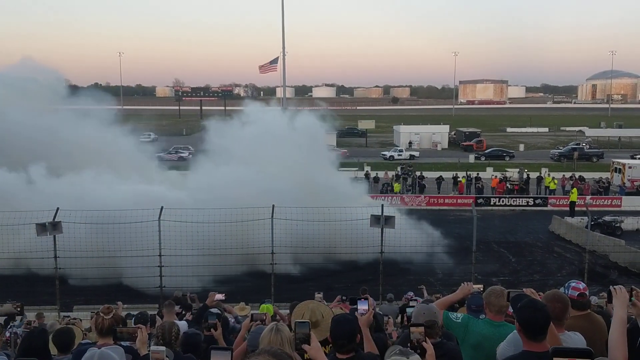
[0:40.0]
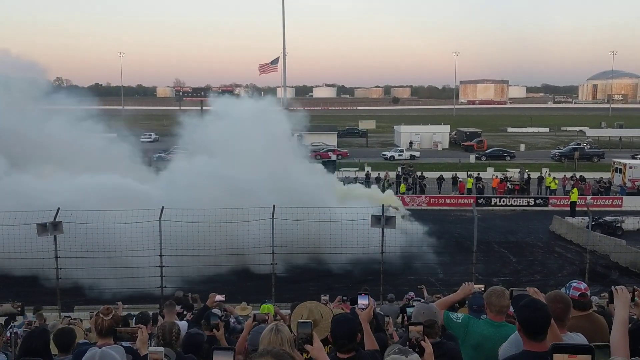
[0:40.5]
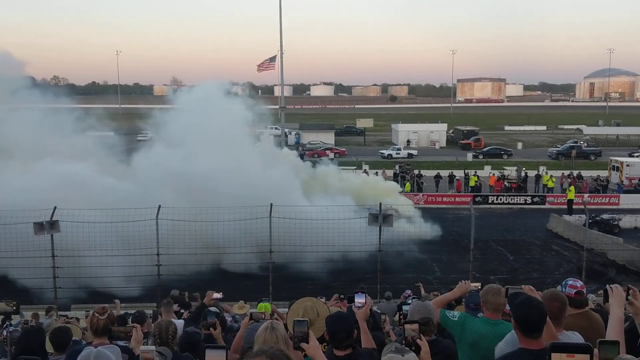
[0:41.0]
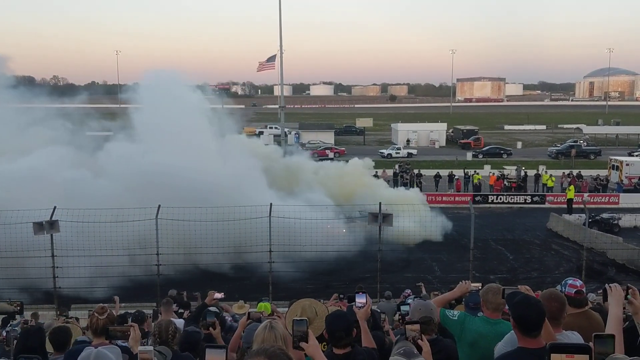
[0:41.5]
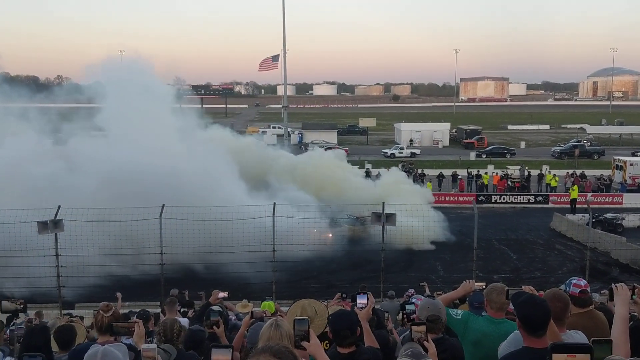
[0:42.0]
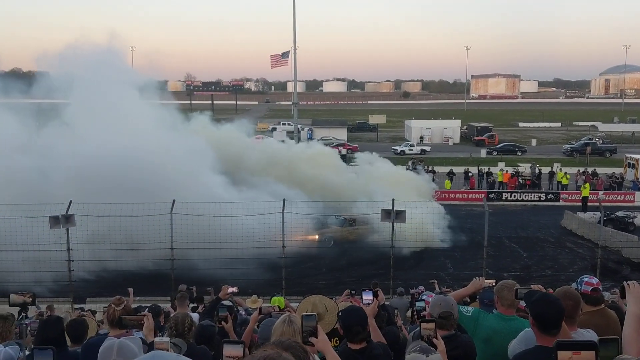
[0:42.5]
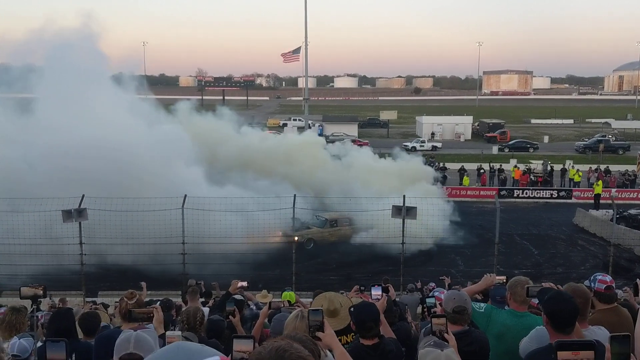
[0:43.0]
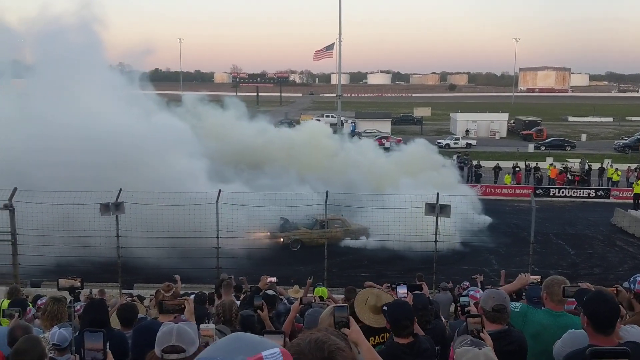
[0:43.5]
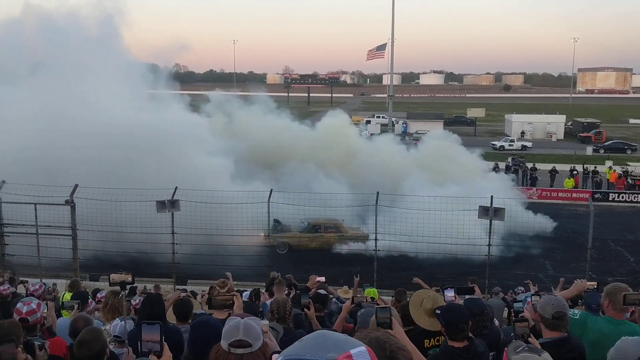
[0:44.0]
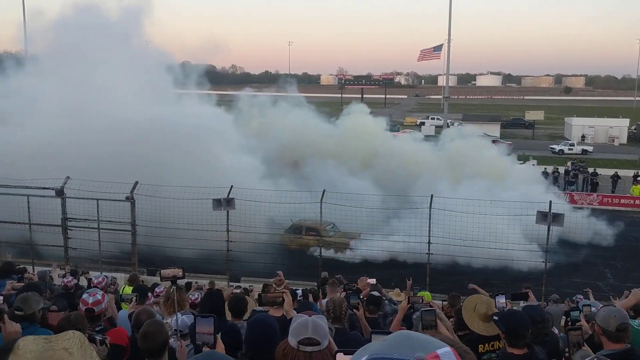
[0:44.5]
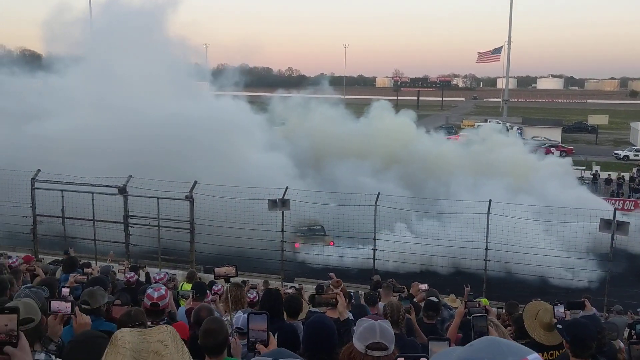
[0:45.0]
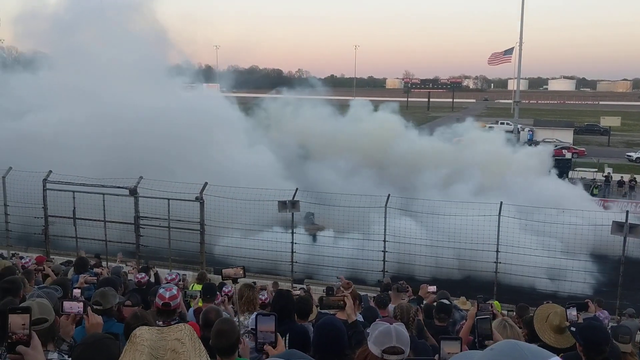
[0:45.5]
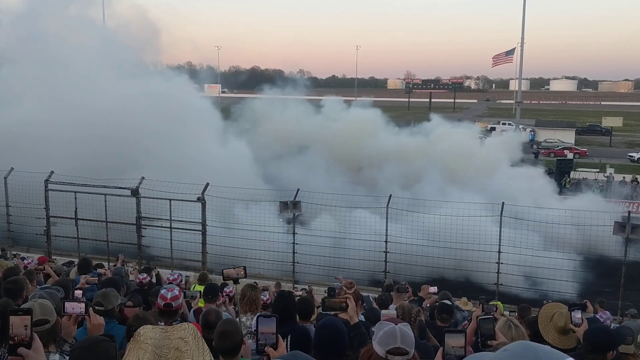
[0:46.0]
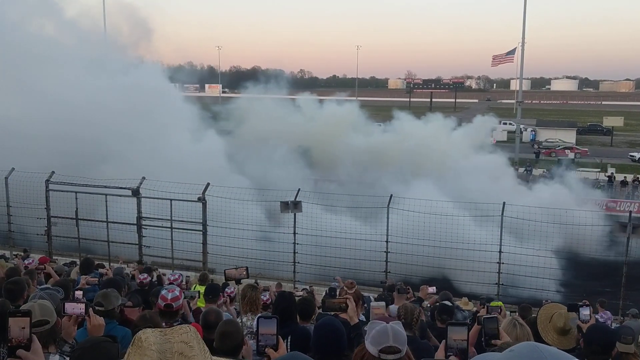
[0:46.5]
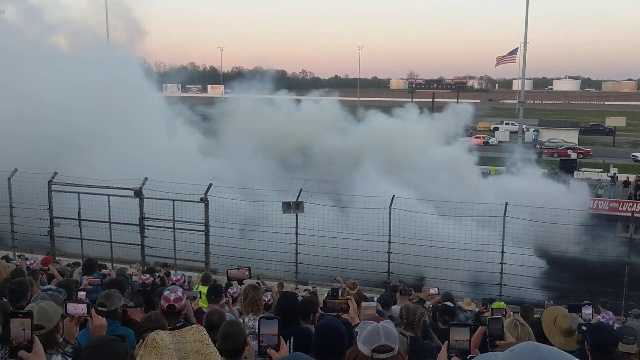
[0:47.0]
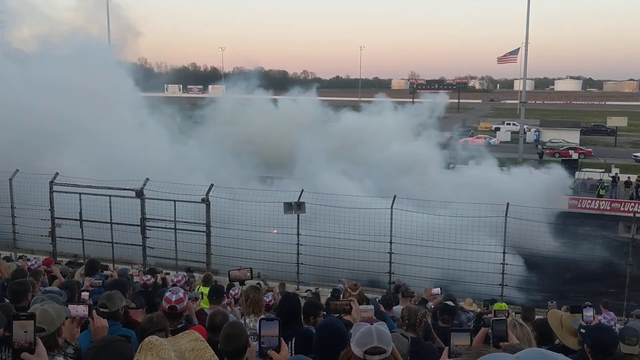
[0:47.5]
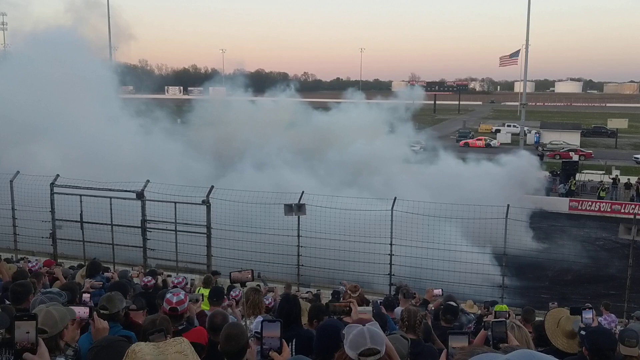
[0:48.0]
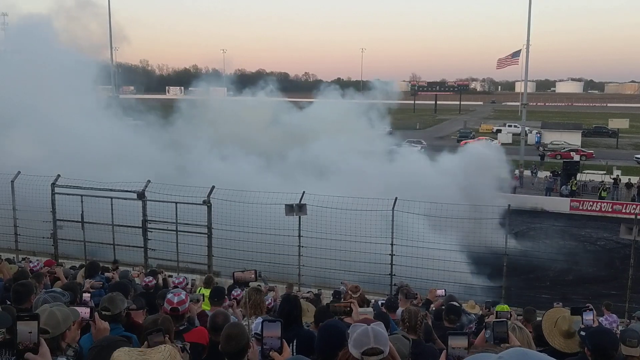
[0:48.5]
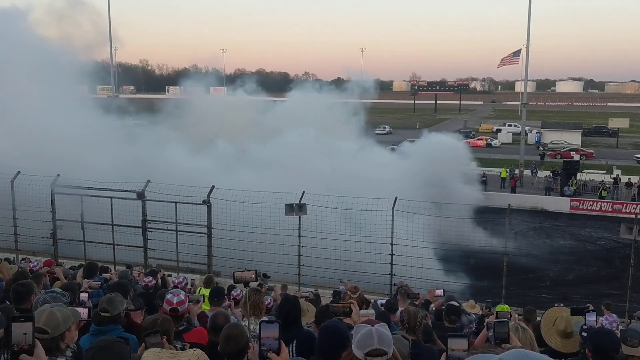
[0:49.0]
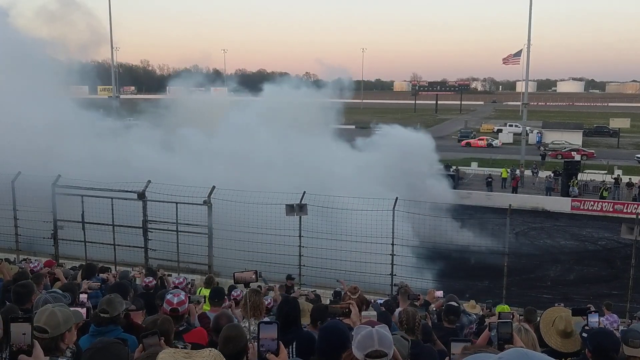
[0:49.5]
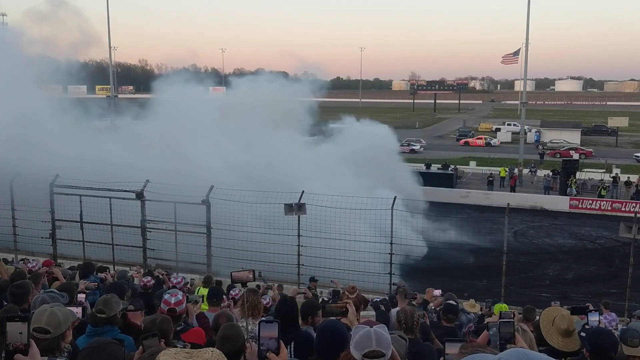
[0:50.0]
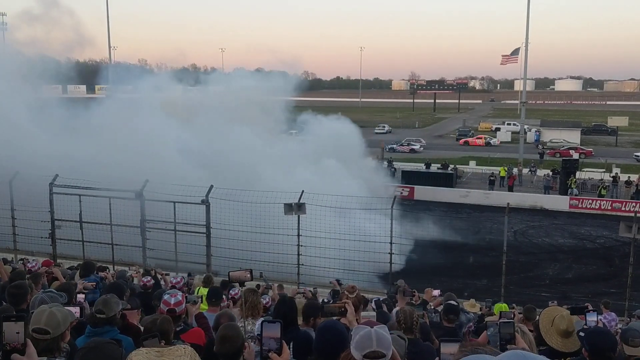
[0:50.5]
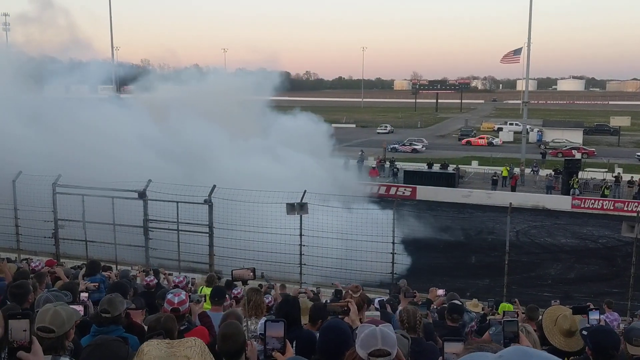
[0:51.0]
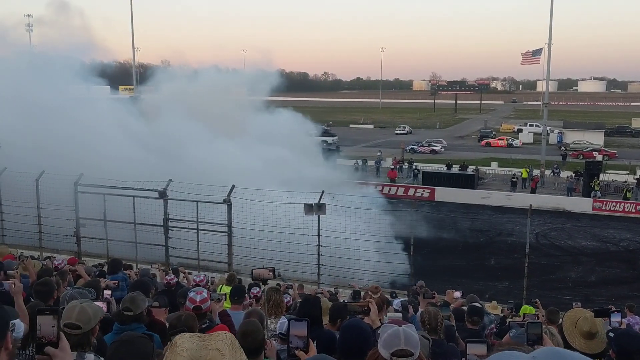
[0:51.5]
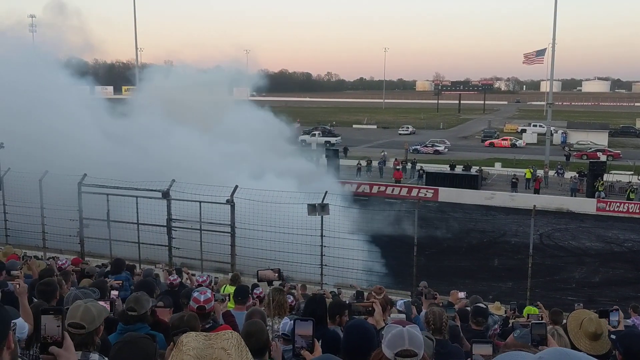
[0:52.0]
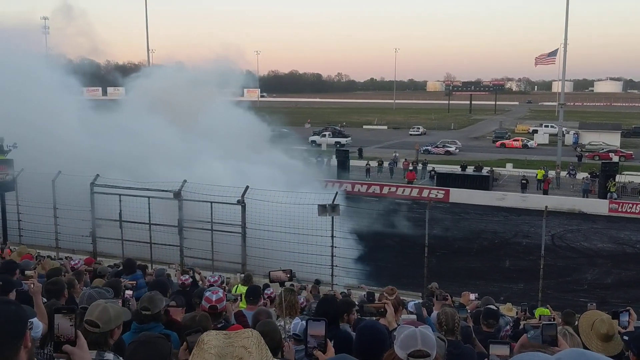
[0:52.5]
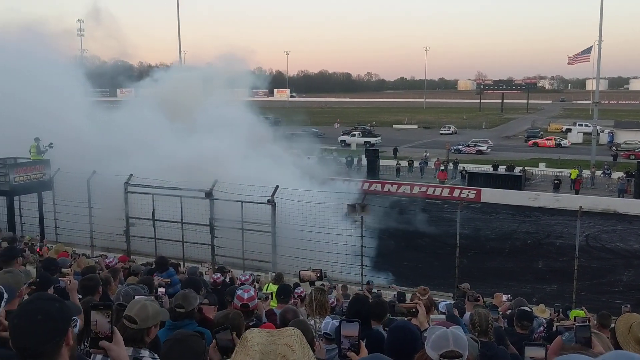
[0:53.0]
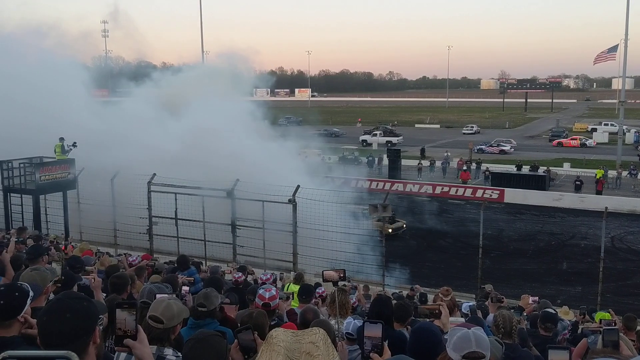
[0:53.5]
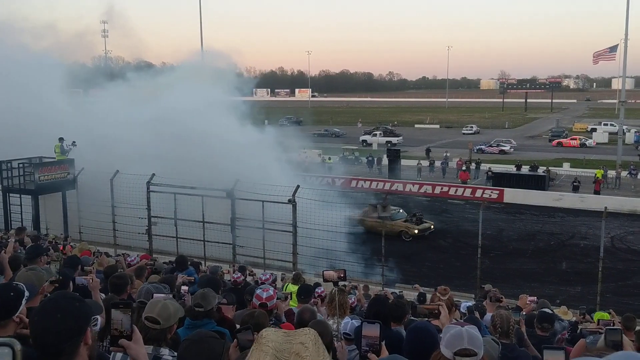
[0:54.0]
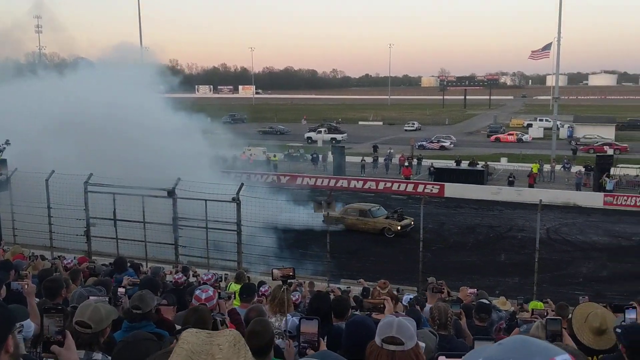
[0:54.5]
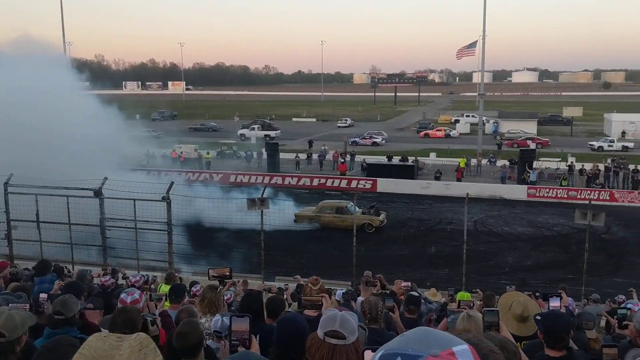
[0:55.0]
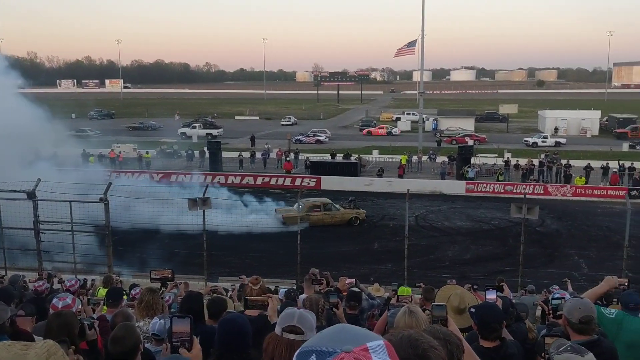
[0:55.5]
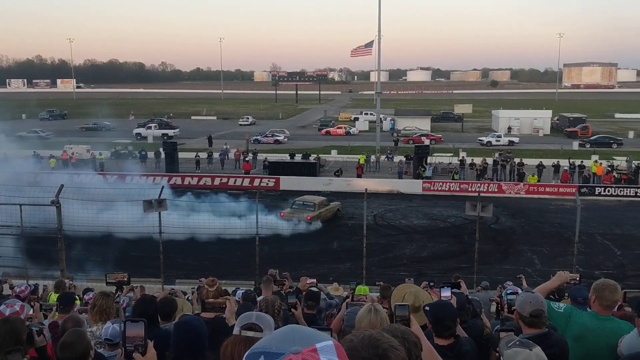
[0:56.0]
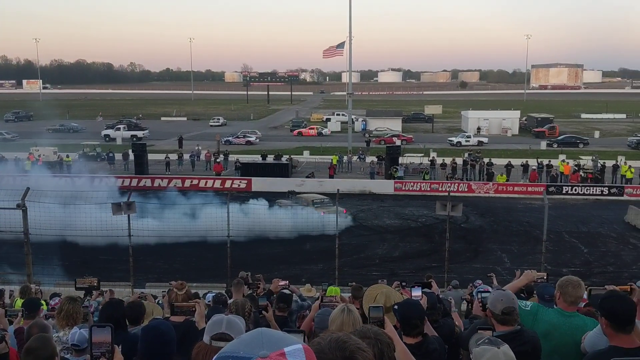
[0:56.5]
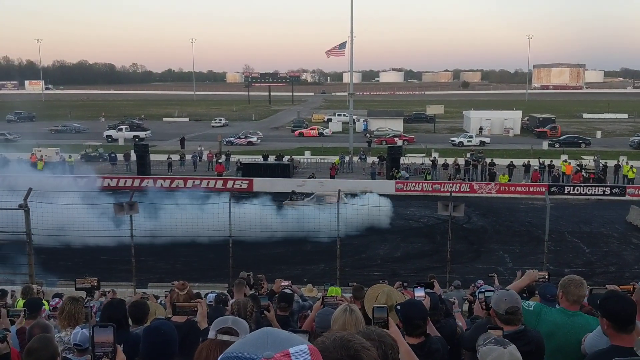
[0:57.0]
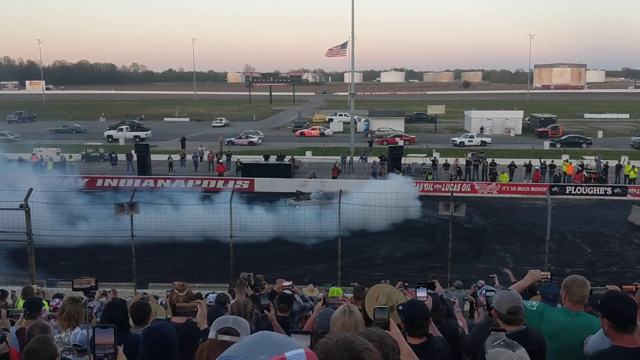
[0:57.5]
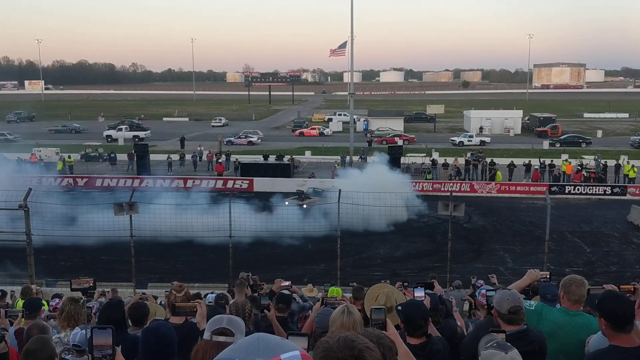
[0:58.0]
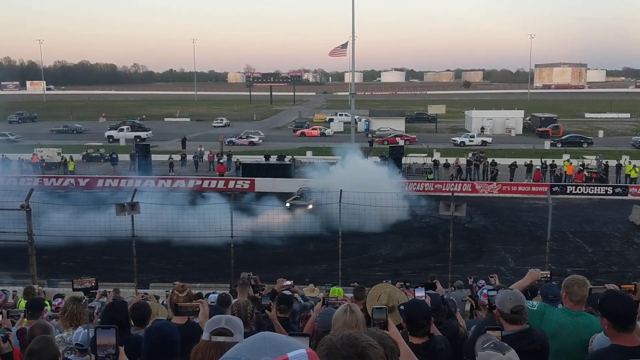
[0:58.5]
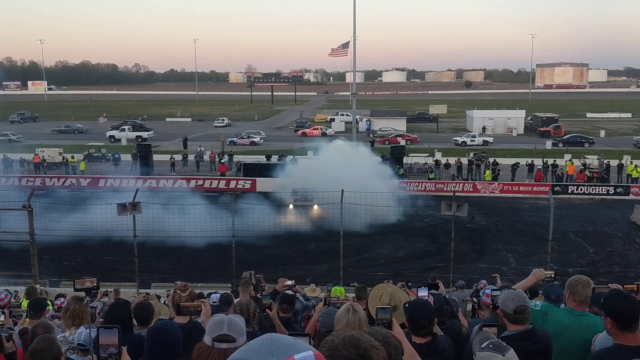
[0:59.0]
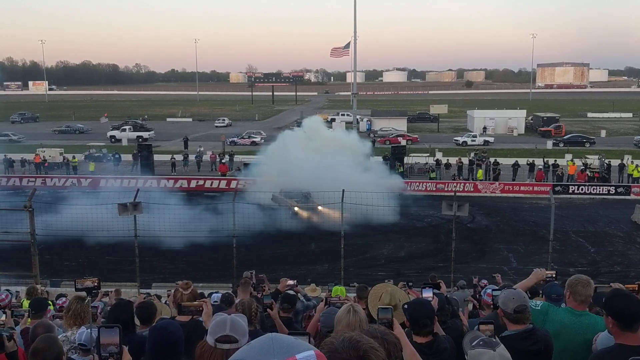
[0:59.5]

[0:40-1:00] The car race circuit continues to be shown, with areas around it where fans can sit and watch; there are hundreds, perhaps thousands, of fans there. The weather is sunny with no clouds, and it appears to be evening. The location seems to be the United States of America, as a USA flag is posted on one of the pillars. A yellow car goes round in circles clockwise on the circuit, with a significant amount of smoke coming out of the back of the car, covering much of the racetrack. After a few more spins, the car drives back in the direction it came from, and after driving for a second or two it attempts to go round in circles clockwise again, though the volume of smoke on the circuit makes it difficult to see. The car then moves forwards again and this time spins anti-clockwise, releasing a significant amount of fumes from the back.